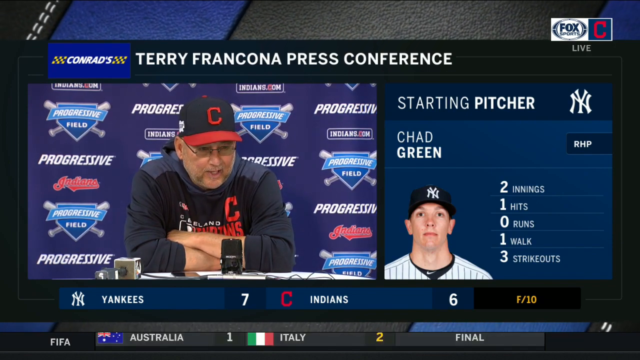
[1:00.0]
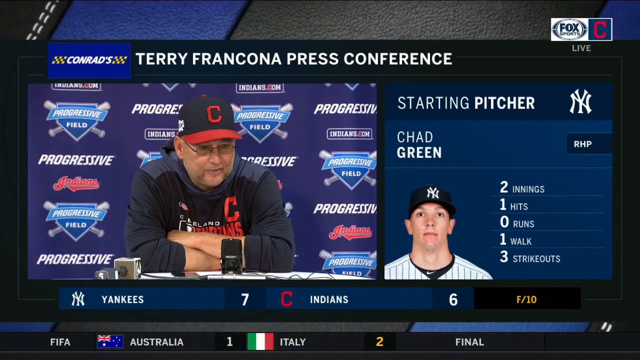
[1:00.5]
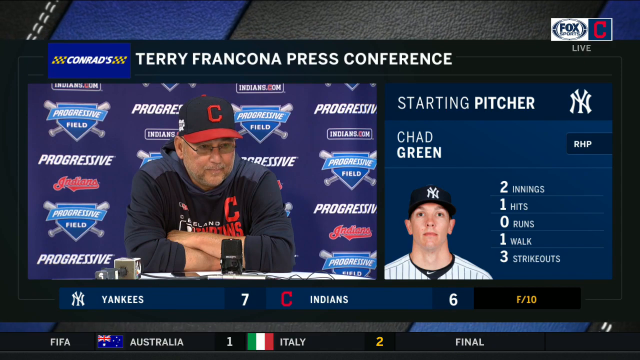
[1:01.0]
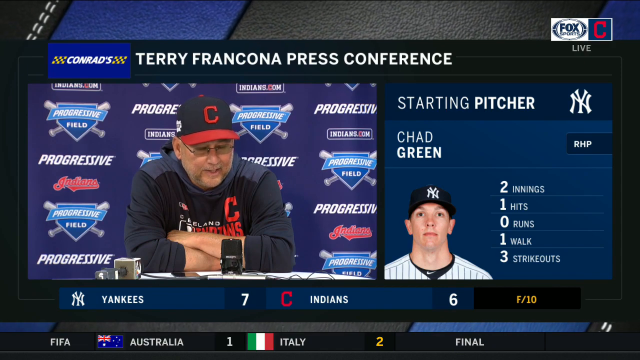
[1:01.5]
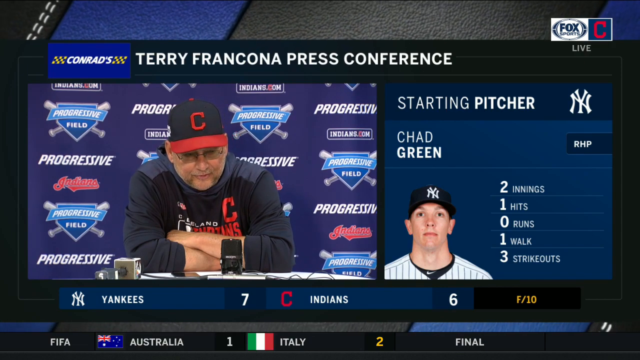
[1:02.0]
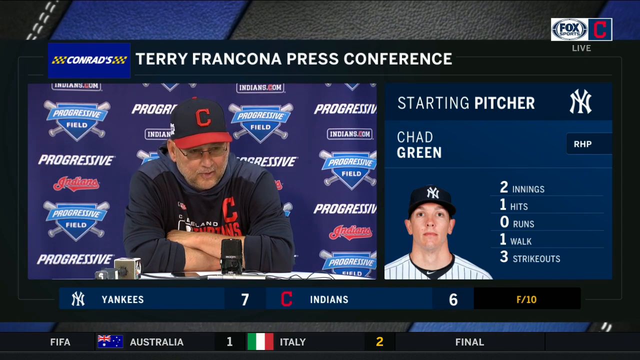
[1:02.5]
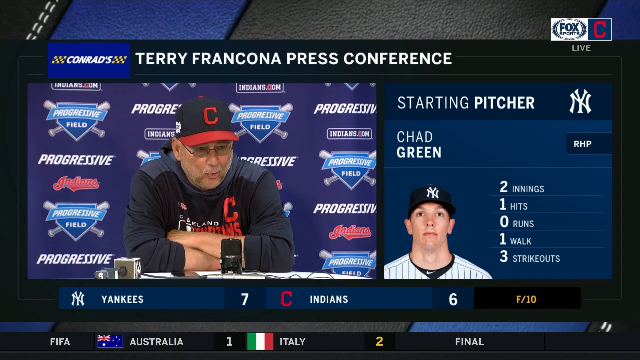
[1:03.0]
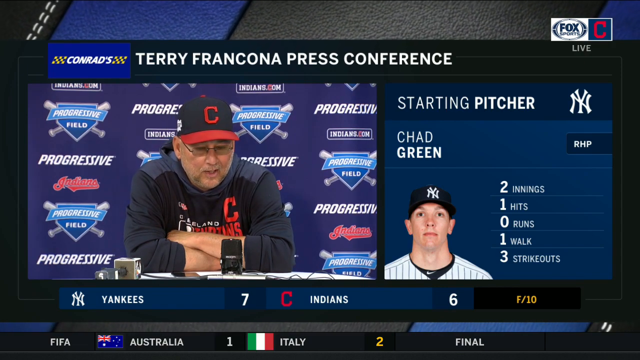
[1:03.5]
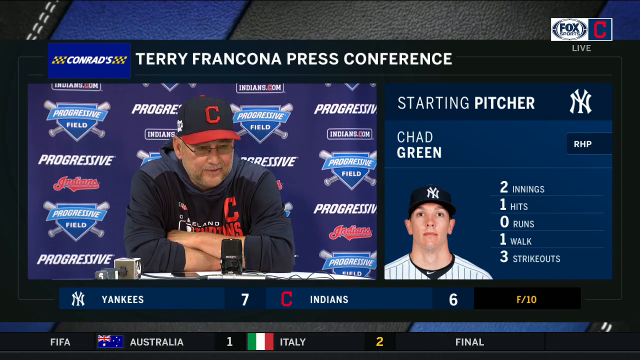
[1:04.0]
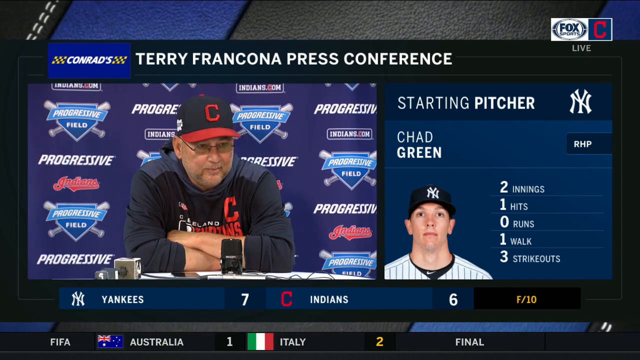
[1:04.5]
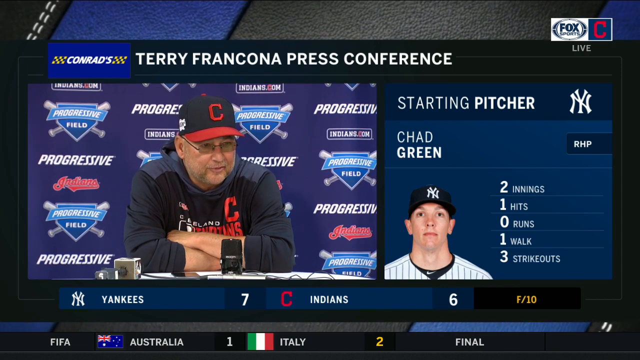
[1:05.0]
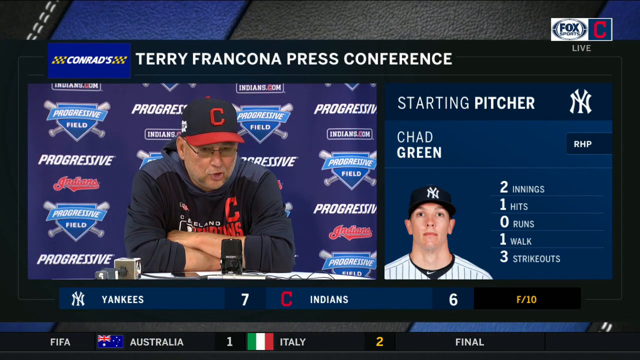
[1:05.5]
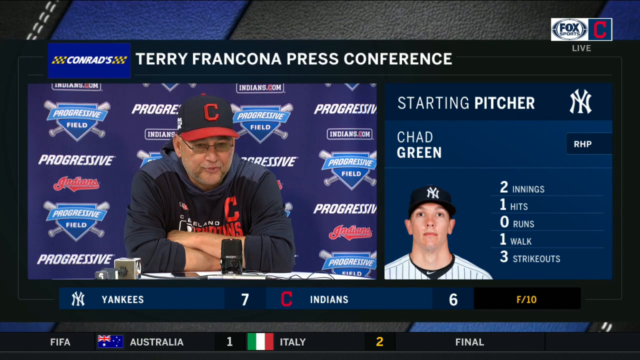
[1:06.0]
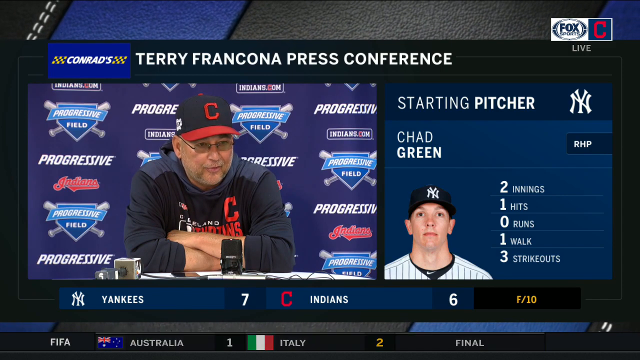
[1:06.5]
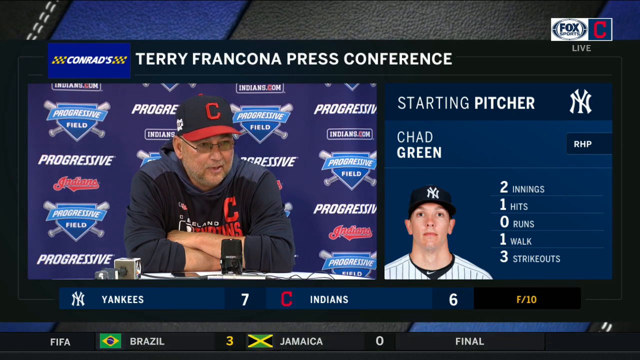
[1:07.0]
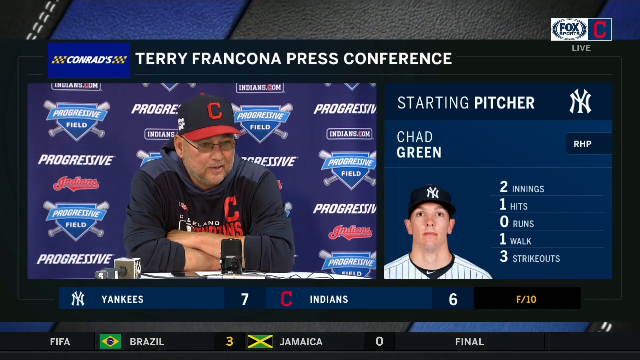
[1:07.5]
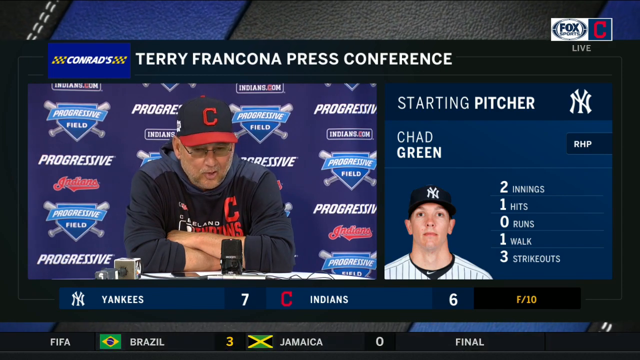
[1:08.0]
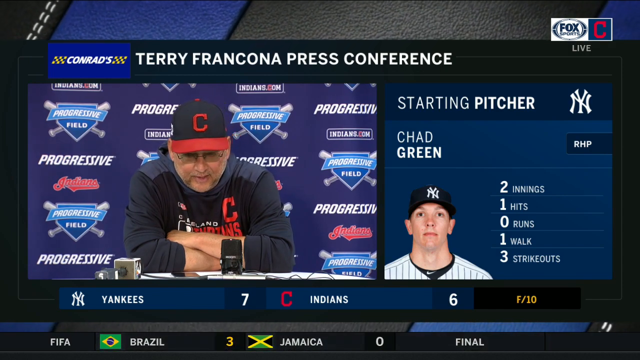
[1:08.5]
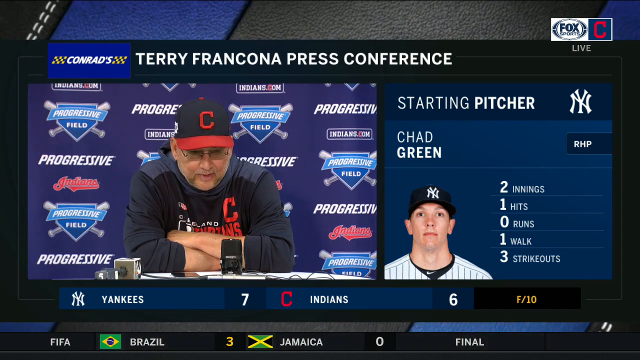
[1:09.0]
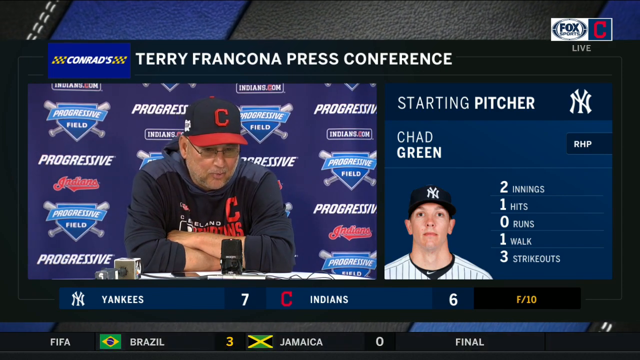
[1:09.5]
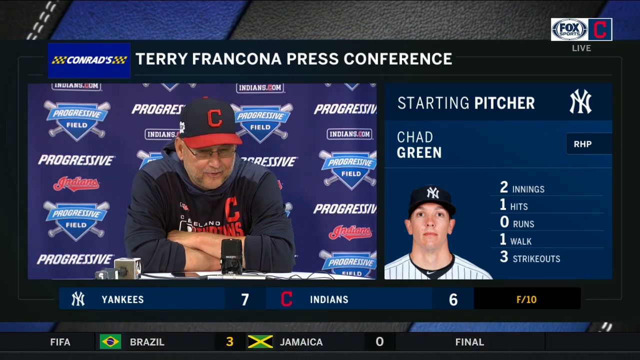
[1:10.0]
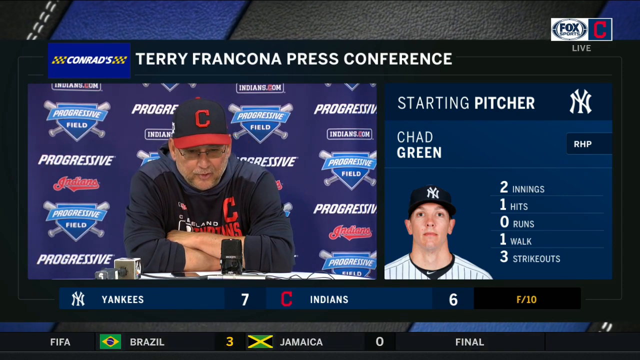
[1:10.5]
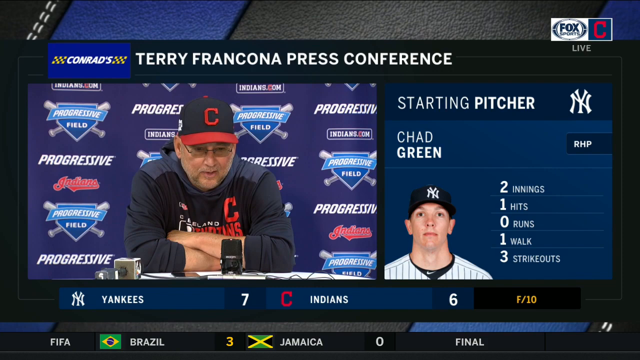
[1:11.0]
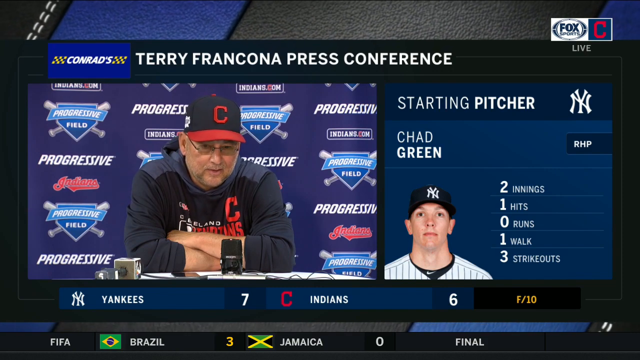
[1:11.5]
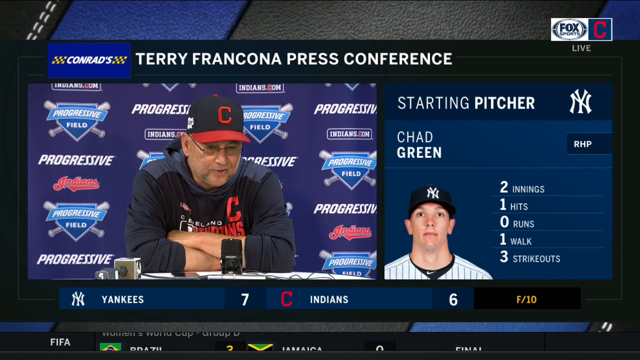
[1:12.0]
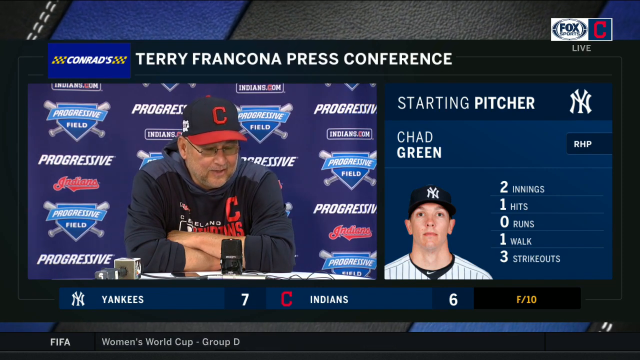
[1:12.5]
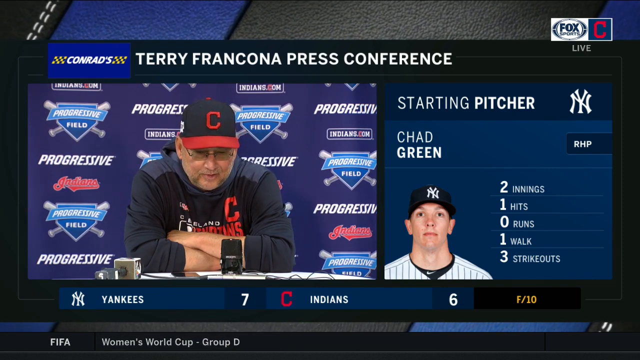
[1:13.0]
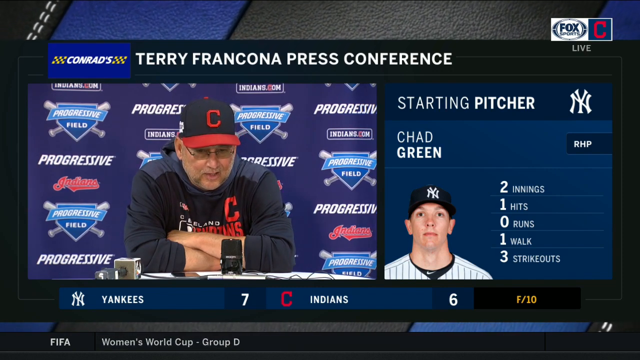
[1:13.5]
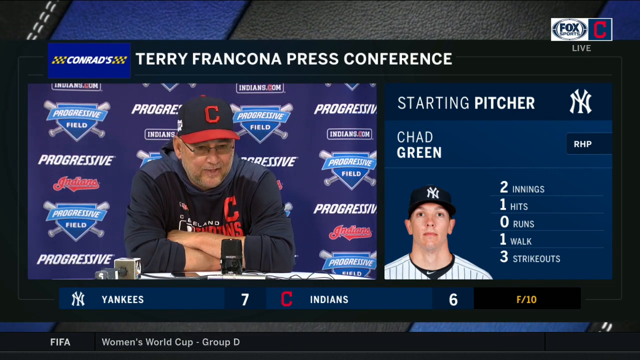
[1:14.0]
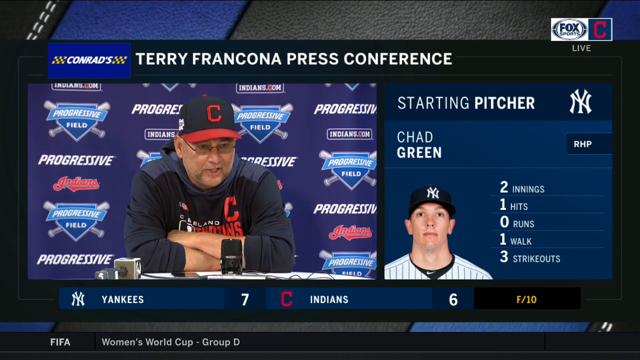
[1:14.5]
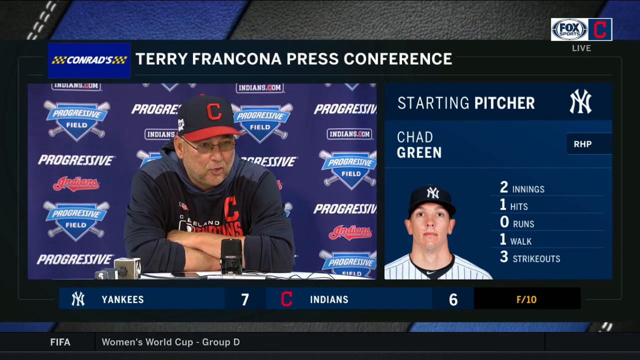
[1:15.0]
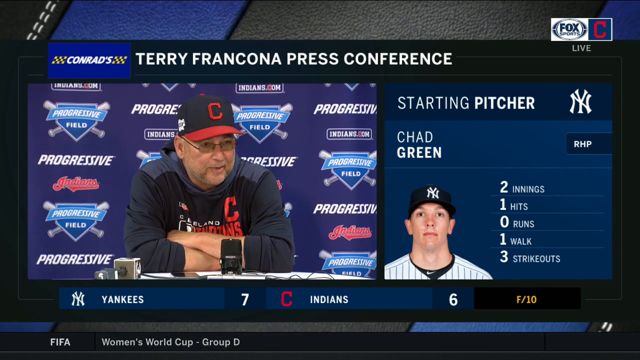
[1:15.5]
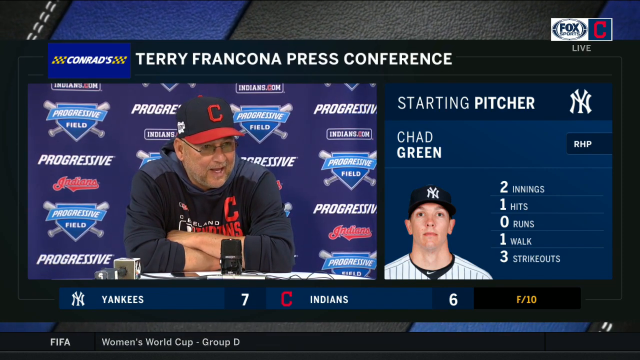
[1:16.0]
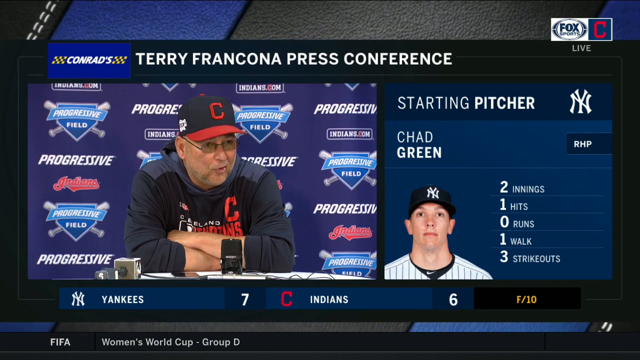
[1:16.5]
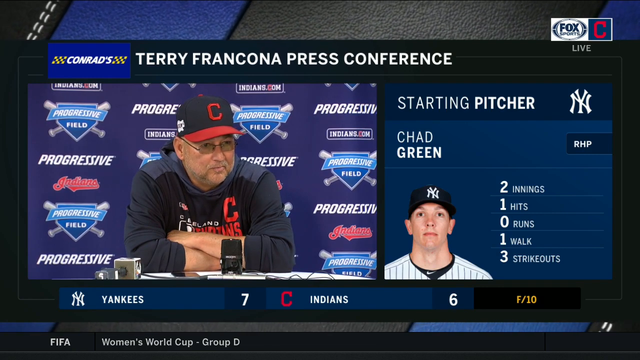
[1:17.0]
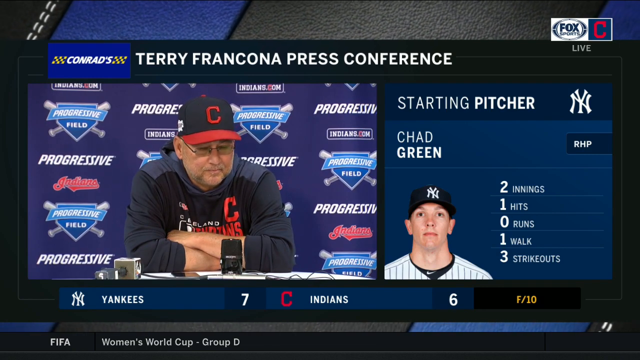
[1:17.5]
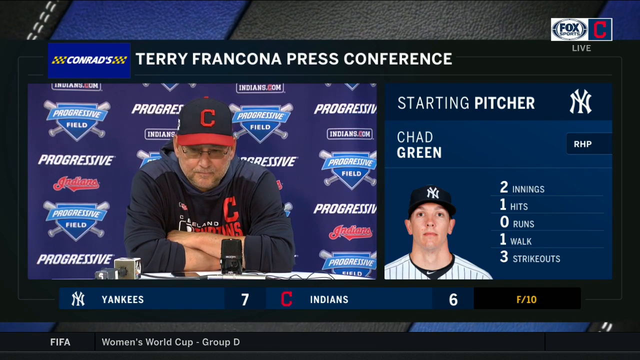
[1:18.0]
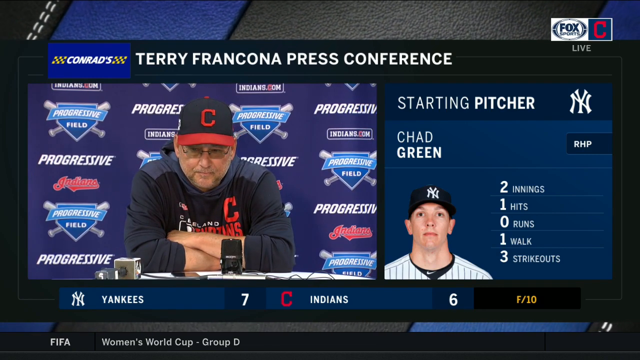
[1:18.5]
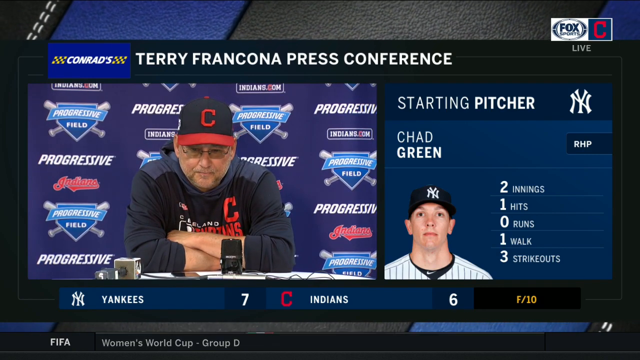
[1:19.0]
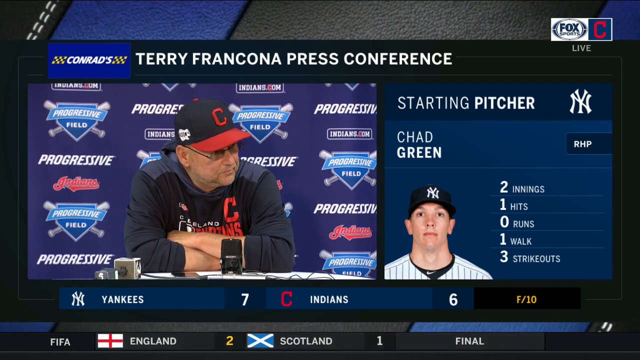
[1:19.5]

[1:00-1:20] Terry Francona, the coach of the Cleveland Indians, talks directly to the audience with his arms folded over a table. He wears glasses and Cleveland Indians apparel, including a Cleveland Indians sweater and a Cleveland Indians baseball cap. He is on the left side of the screen, while the right side shows various baseball players, including starting pitcher Chad Green, who talks directly to the camera, along with his innings and runs. At the bottom of the screen, the score shows the Yankees with 7 versus the Cleveland Indians with 6.